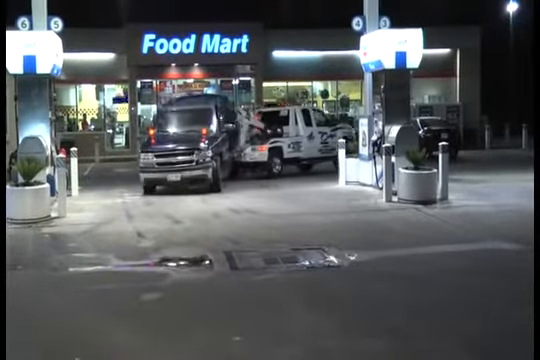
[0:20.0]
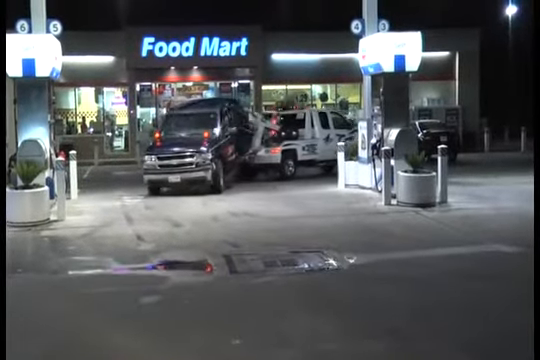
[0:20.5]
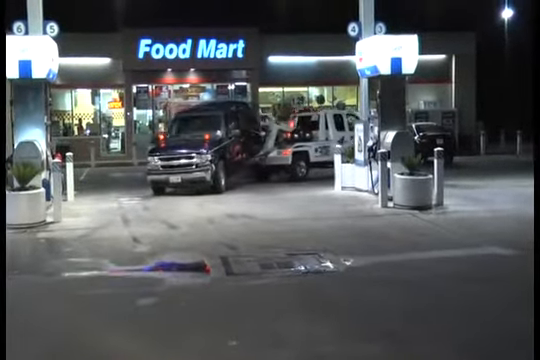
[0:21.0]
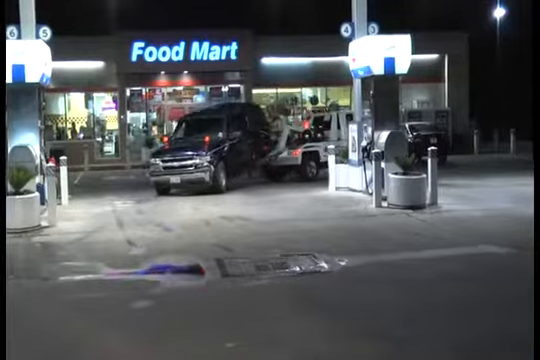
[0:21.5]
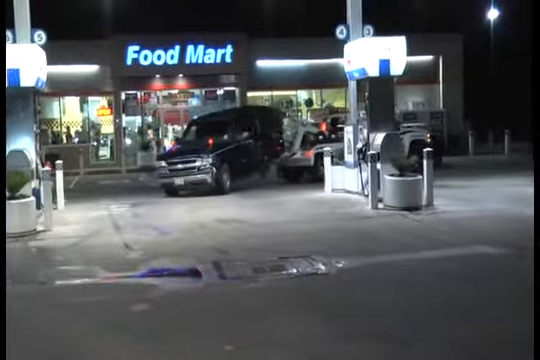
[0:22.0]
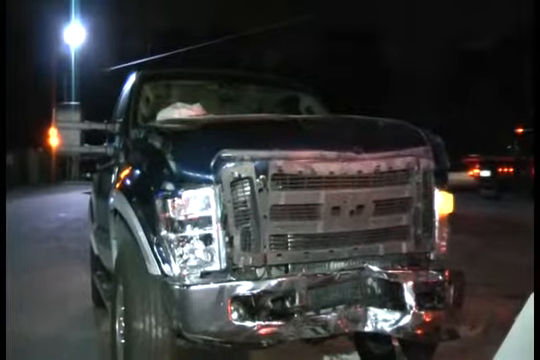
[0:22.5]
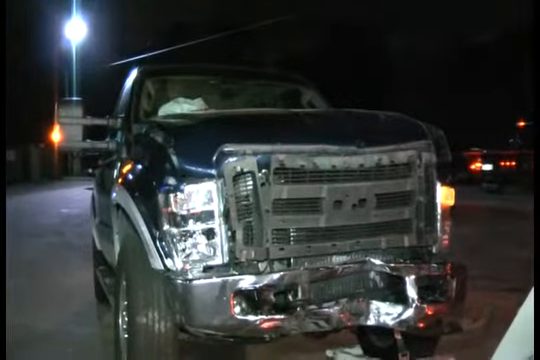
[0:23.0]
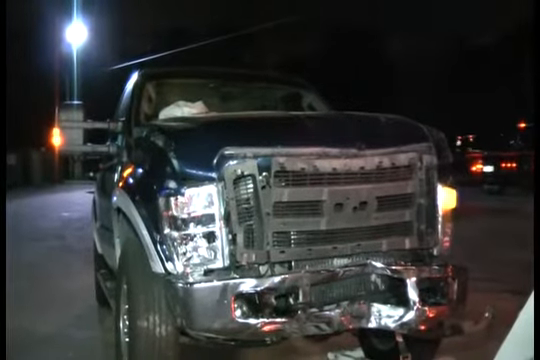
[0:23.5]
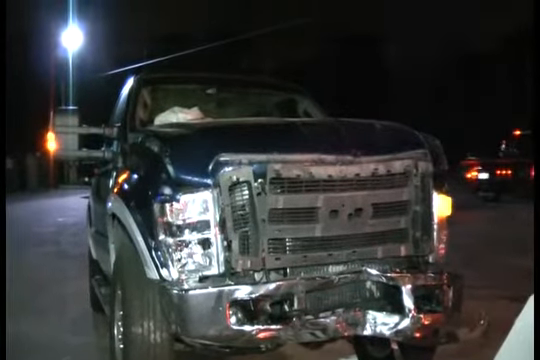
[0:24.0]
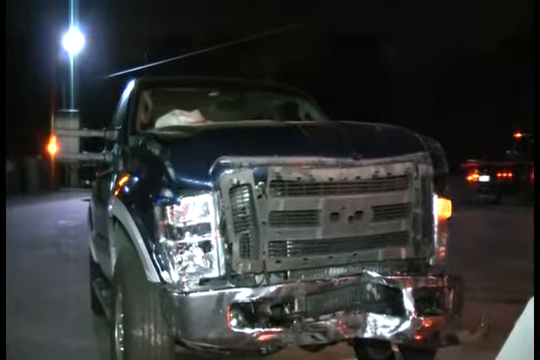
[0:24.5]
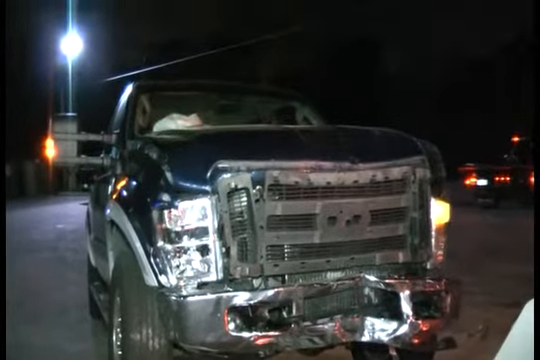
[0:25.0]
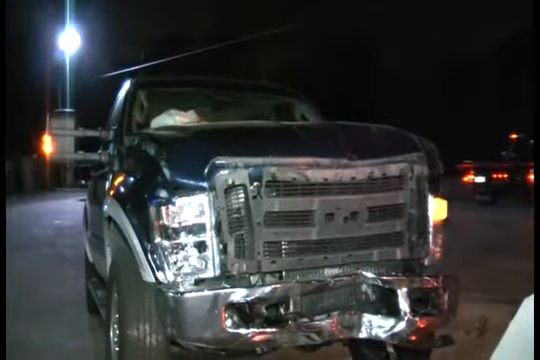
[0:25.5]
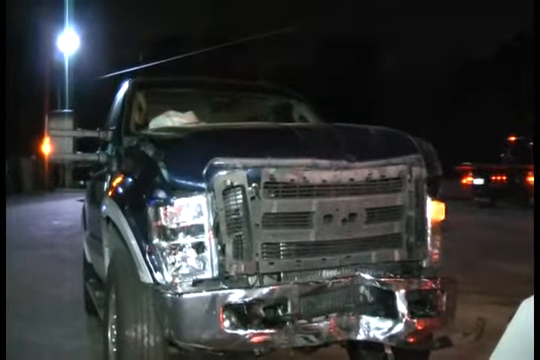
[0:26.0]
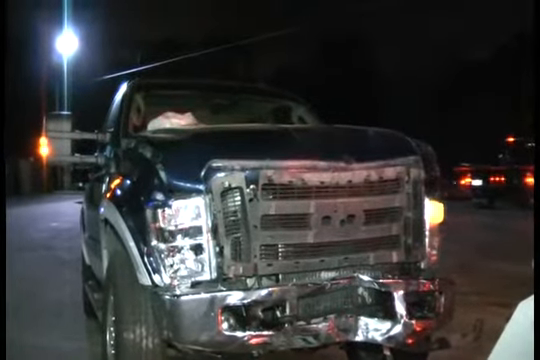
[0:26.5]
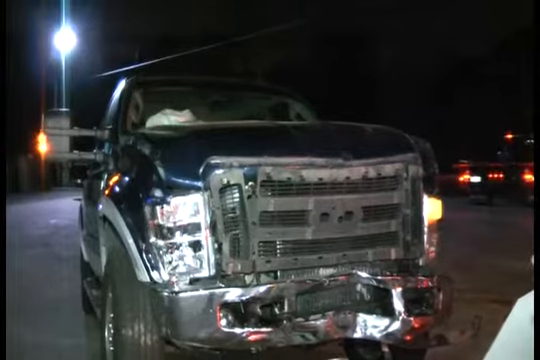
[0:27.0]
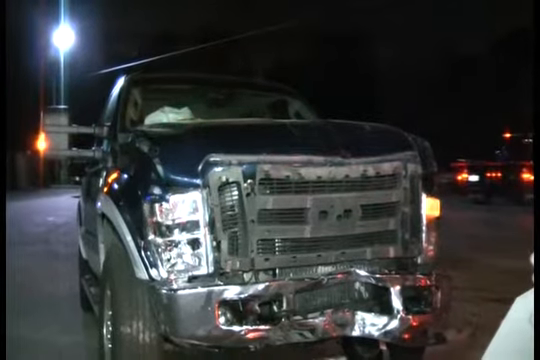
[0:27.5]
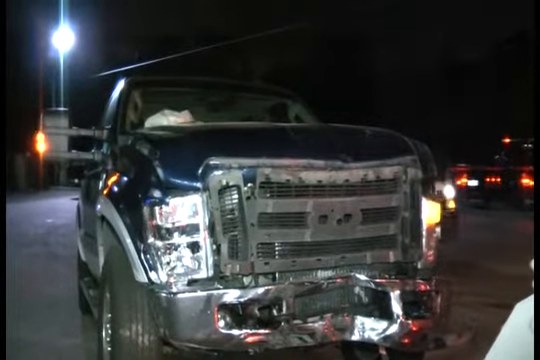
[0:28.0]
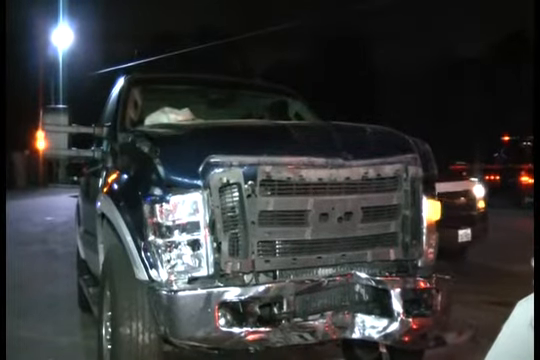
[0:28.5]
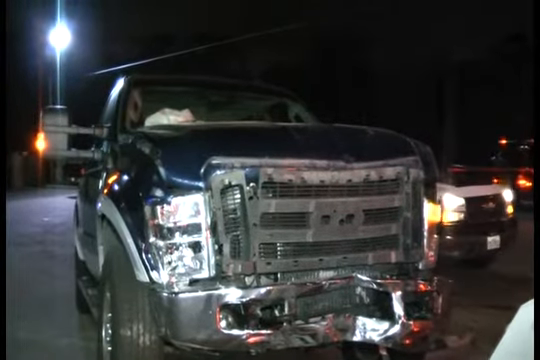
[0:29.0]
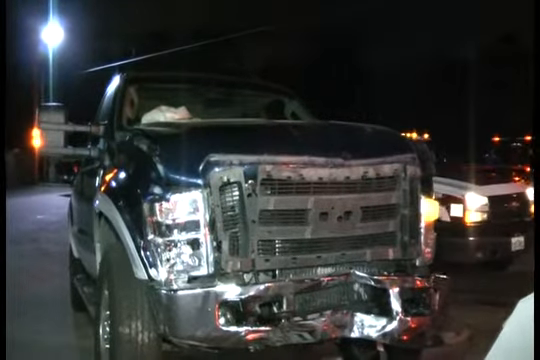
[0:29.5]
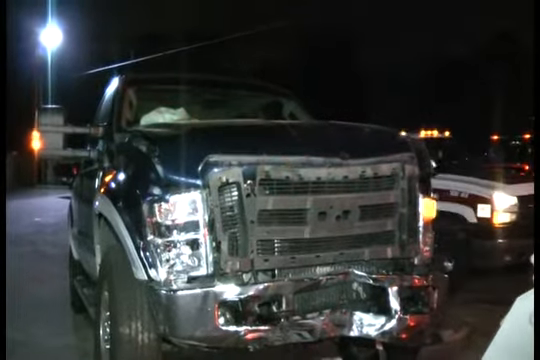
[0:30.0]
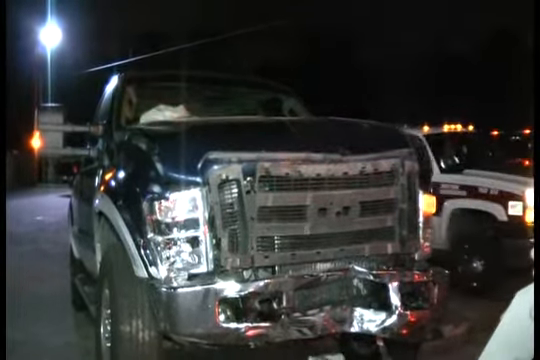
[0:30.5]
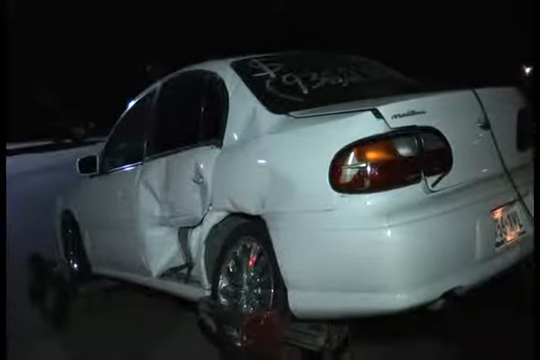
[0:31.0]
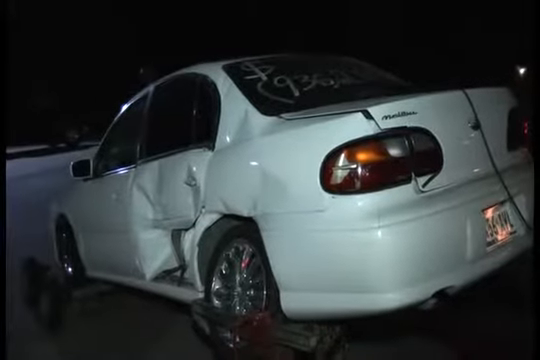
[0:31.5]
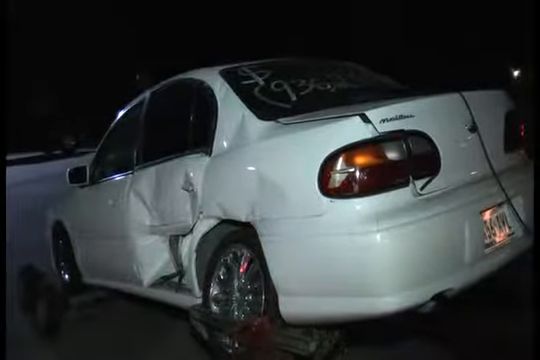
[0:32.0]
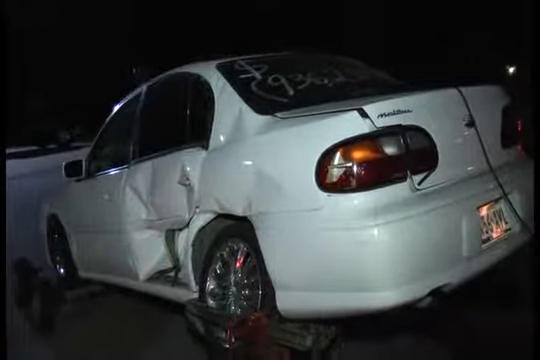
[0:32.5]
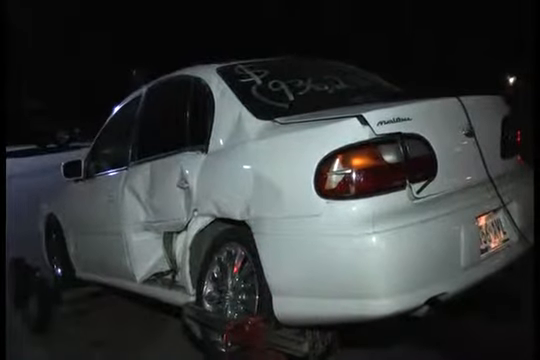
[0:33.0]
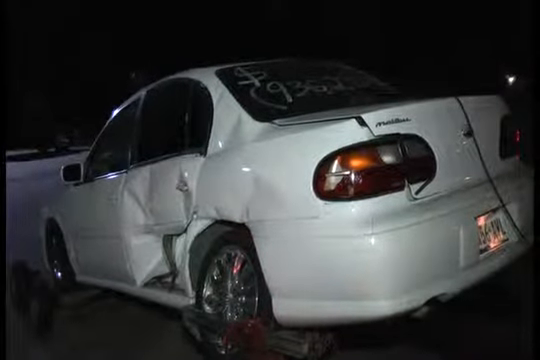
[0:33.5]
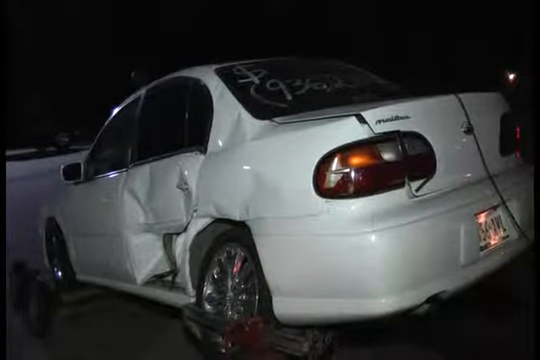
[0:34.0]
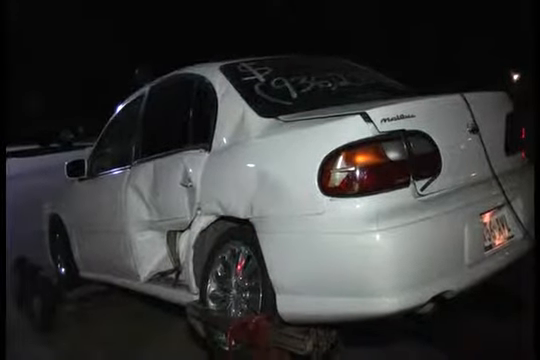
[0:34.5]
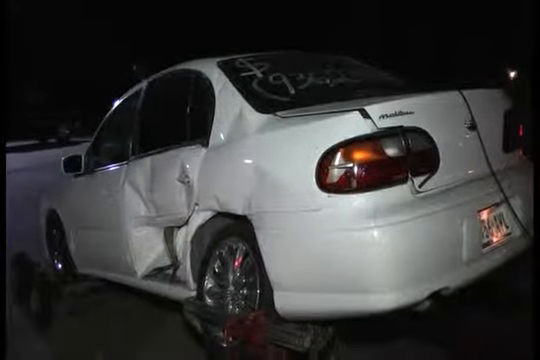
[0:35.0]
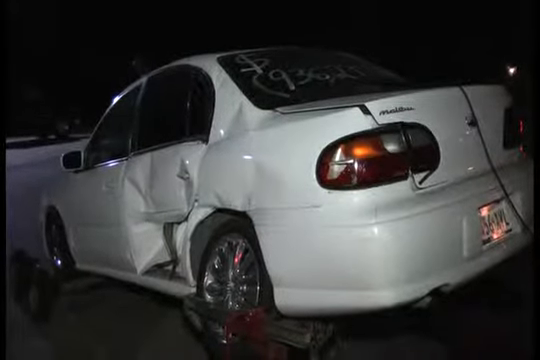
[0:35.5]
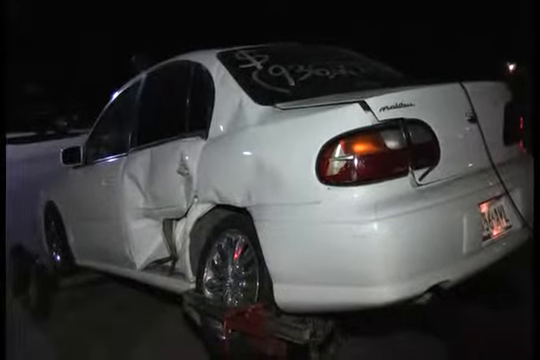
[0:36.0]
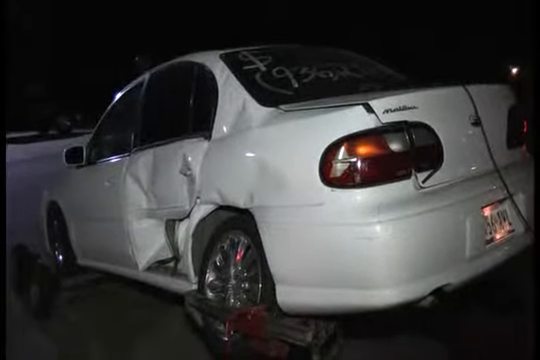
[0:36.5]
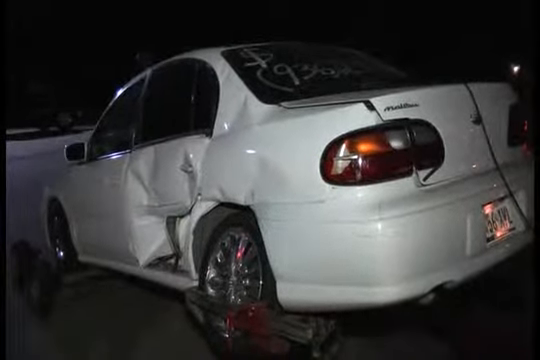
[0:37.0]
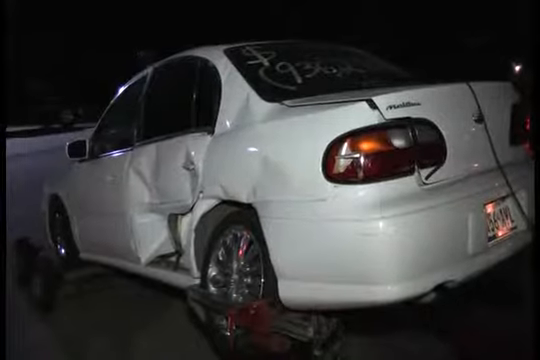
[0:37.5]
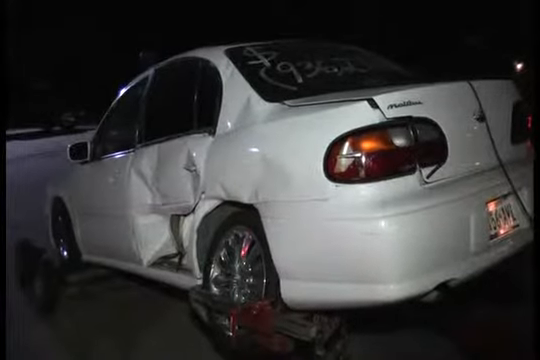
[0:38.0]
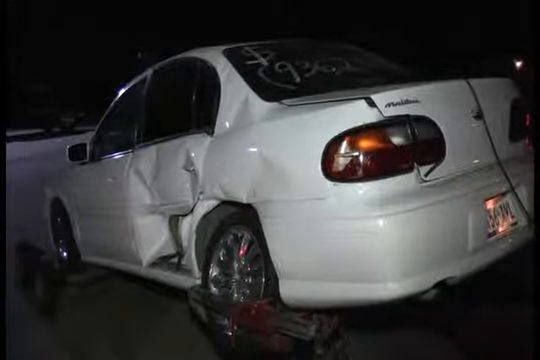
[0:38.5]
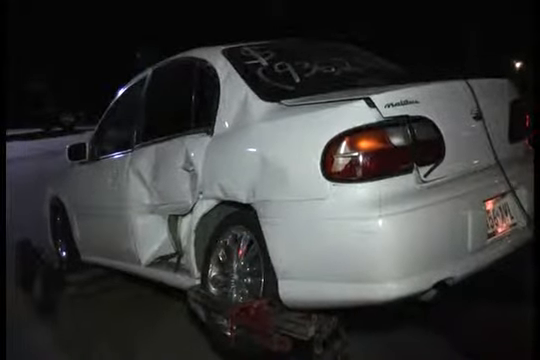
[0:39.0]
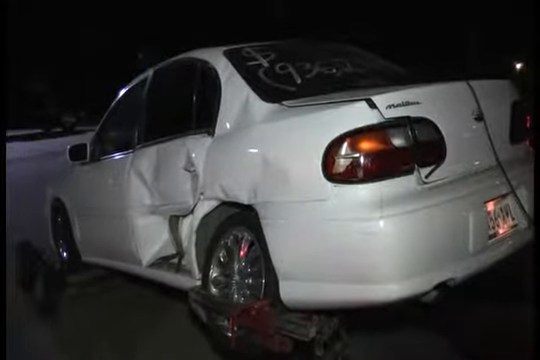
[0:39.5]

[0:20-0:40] The white pickup truck tows the black car into the gas station and drives by the outside of the food mart. It is night, and there is a puddle of water on the ground at the gas station. The video cuts to a black car with a dent at the front. In the background a street light is on. Behind the car, on the right side of the screen, a car with its headlights on passes by and disappears out of frame. The airbags of the dented car are activated. A white truck with its headlights on appears on the left side of the dented car, driving beside it. The video then cuts to another car, a white car with a dent on its back left door, parked in a lot at night with no signs of activity around it.